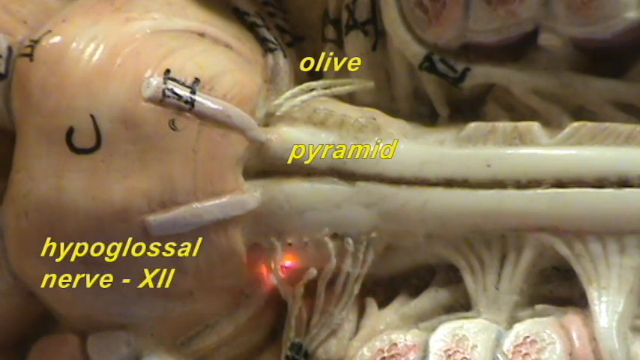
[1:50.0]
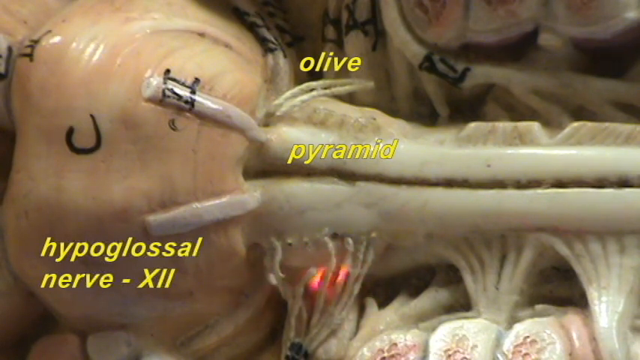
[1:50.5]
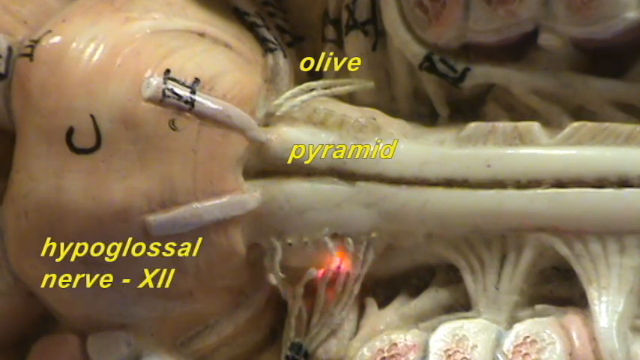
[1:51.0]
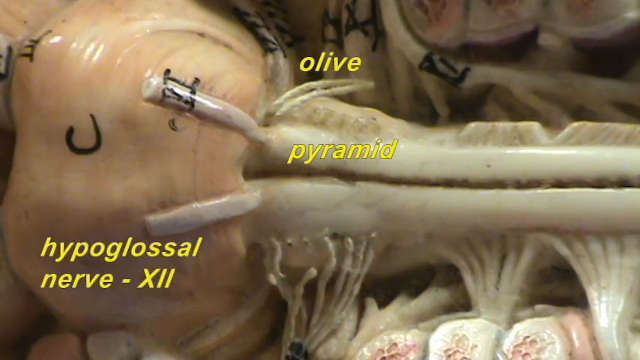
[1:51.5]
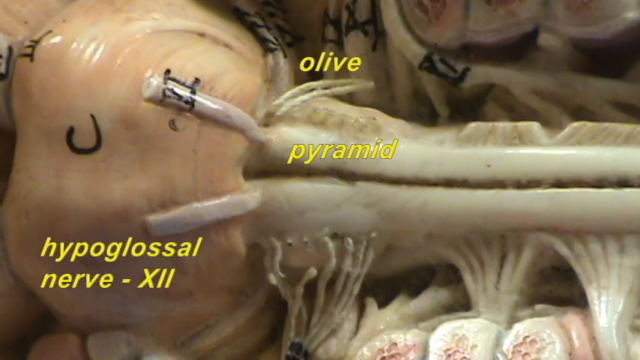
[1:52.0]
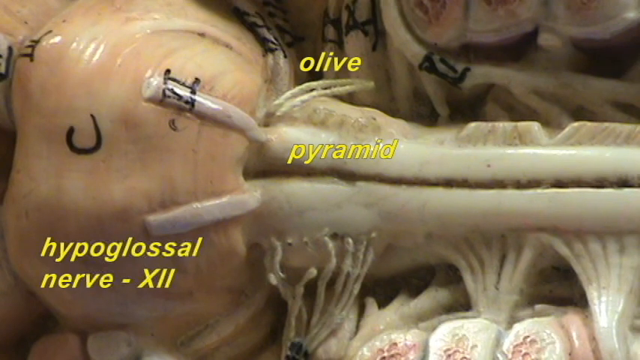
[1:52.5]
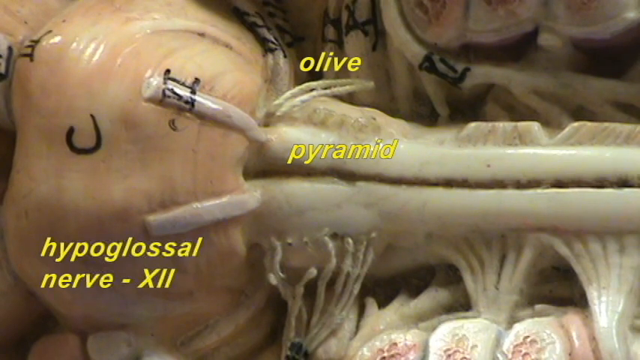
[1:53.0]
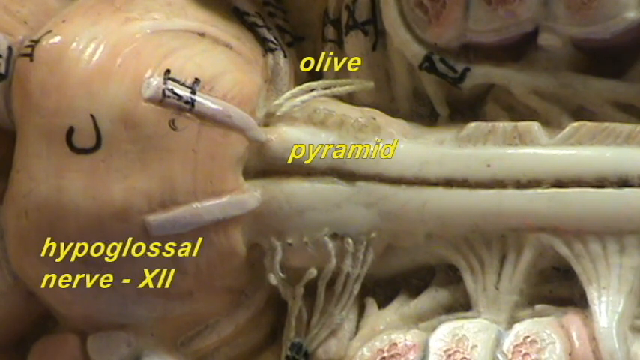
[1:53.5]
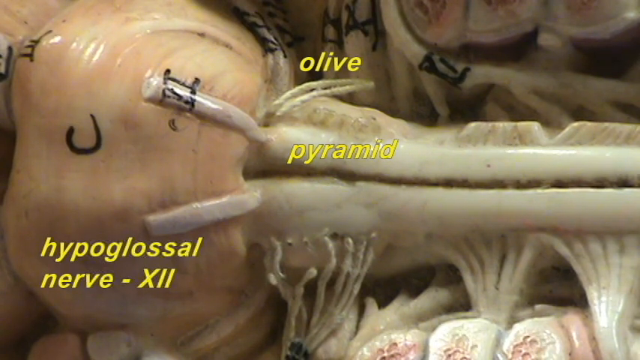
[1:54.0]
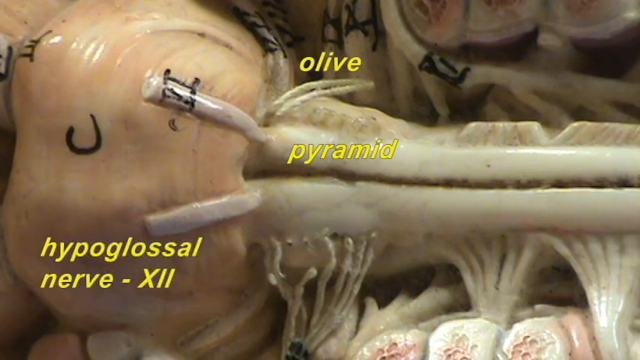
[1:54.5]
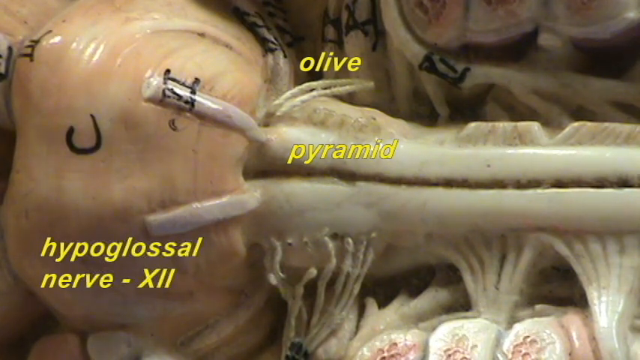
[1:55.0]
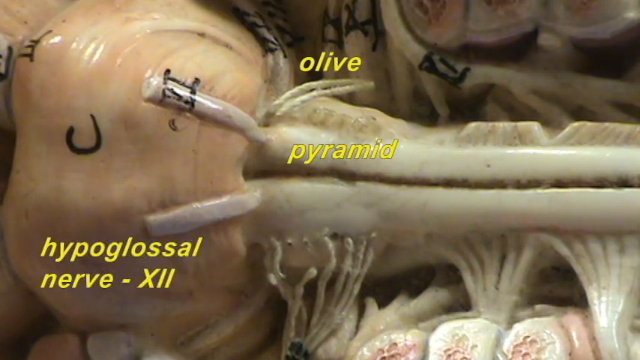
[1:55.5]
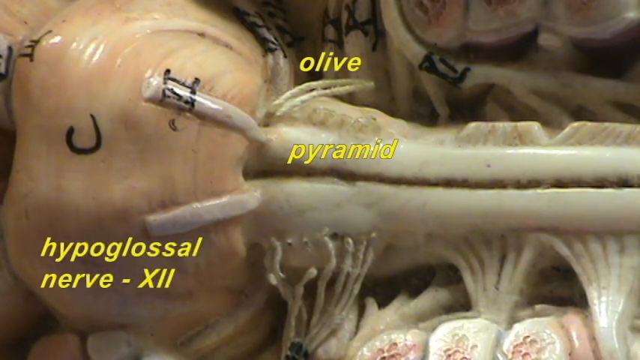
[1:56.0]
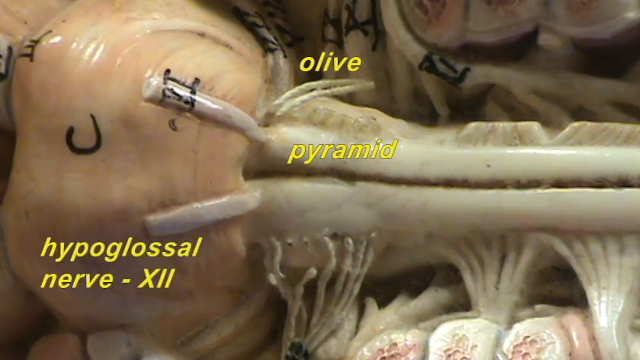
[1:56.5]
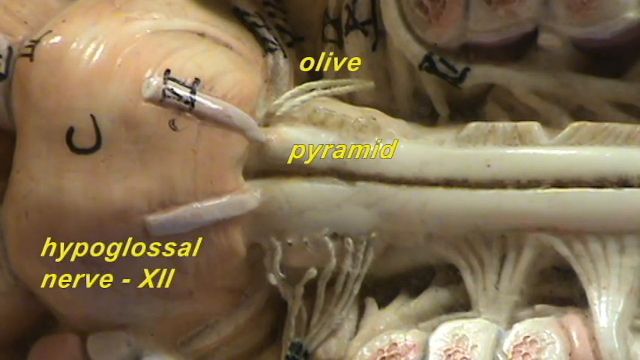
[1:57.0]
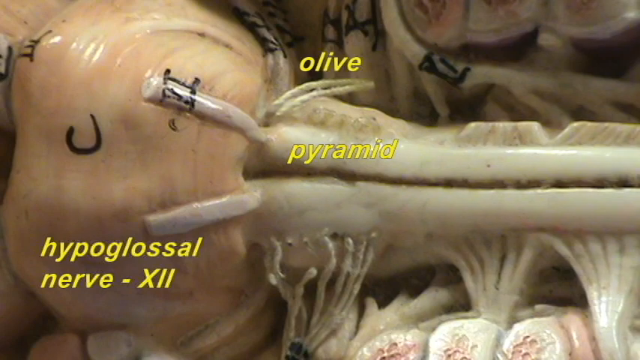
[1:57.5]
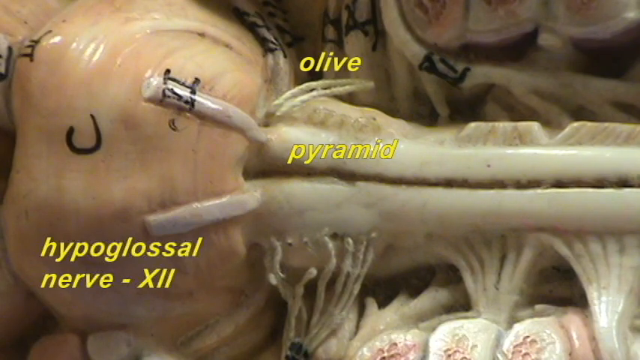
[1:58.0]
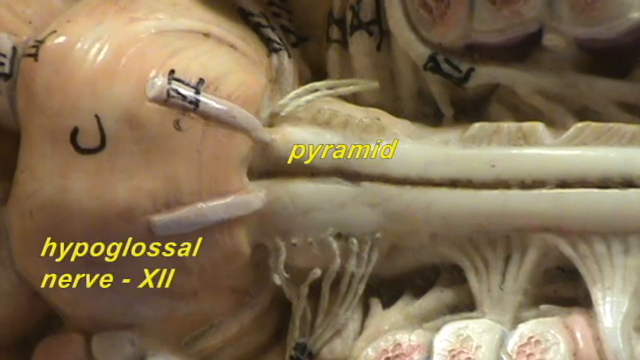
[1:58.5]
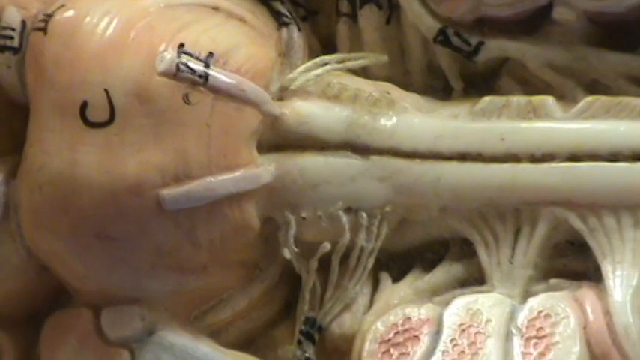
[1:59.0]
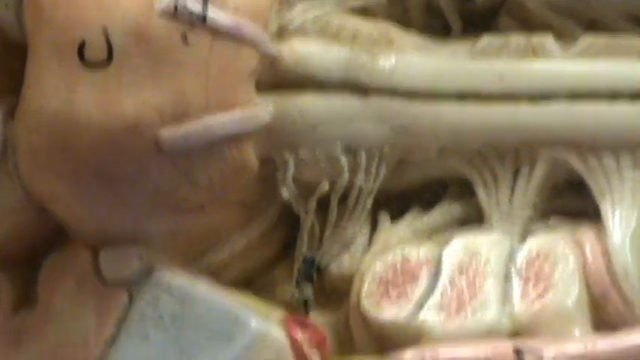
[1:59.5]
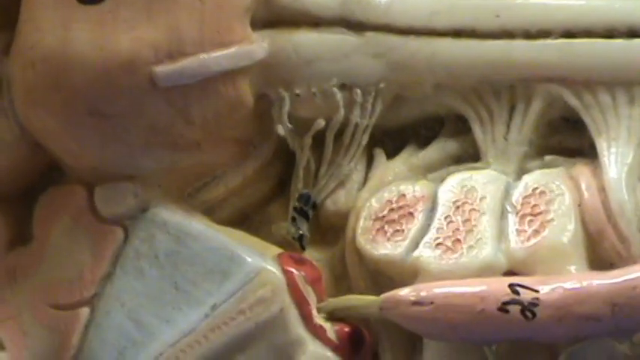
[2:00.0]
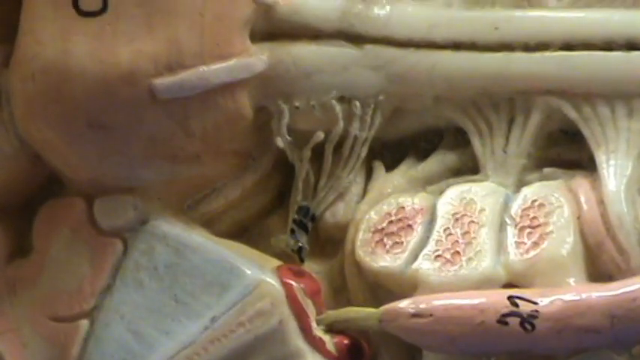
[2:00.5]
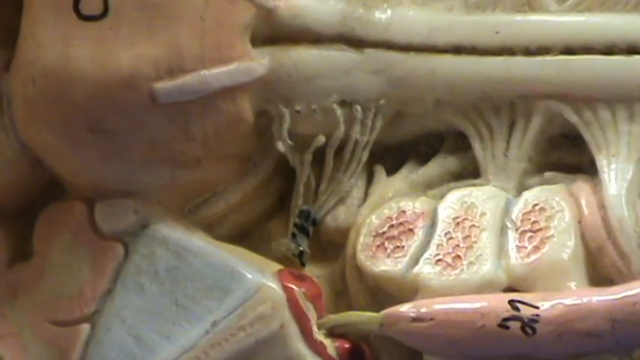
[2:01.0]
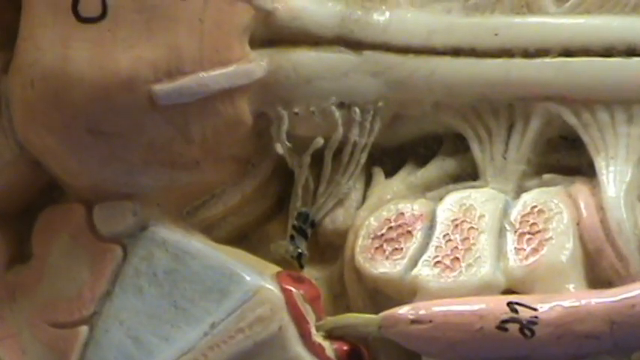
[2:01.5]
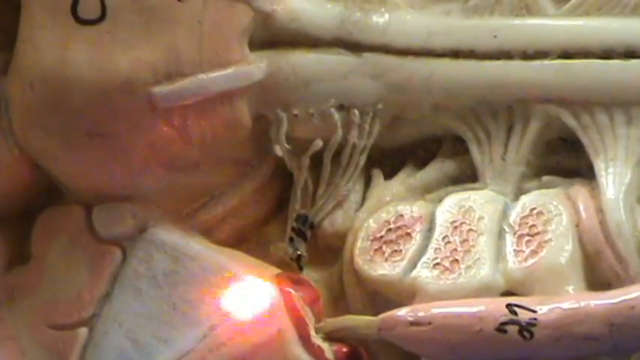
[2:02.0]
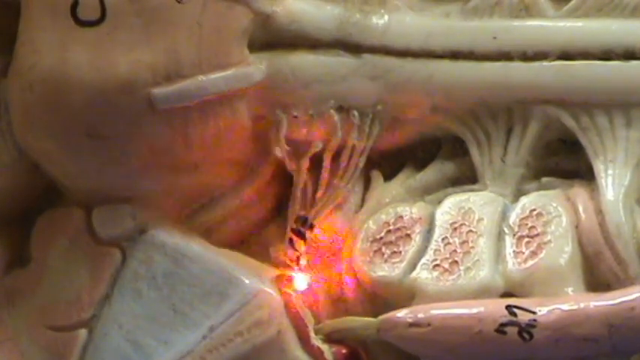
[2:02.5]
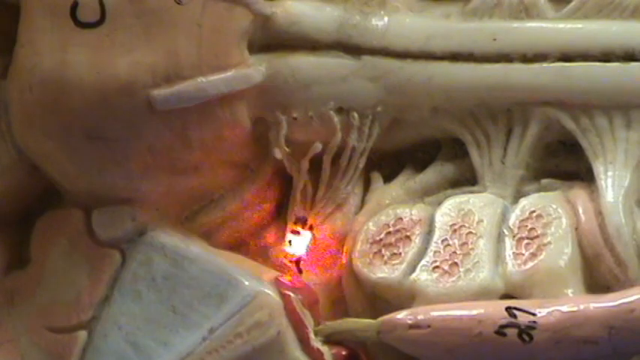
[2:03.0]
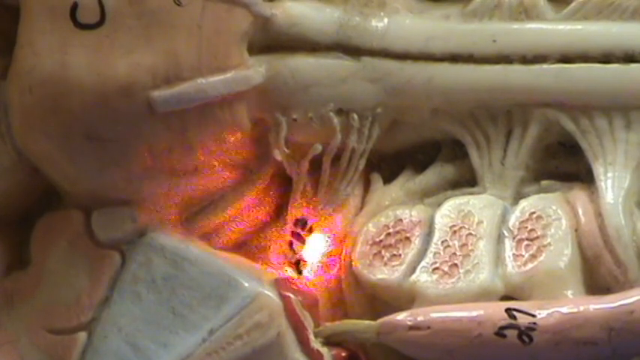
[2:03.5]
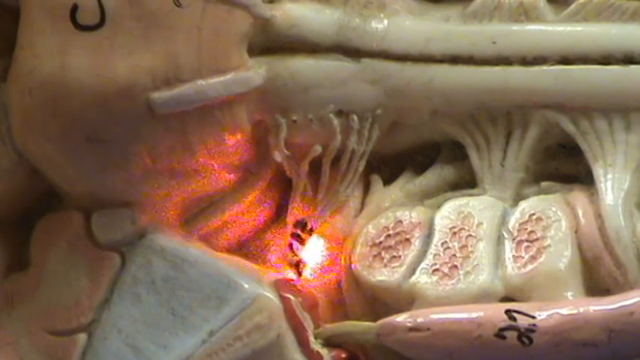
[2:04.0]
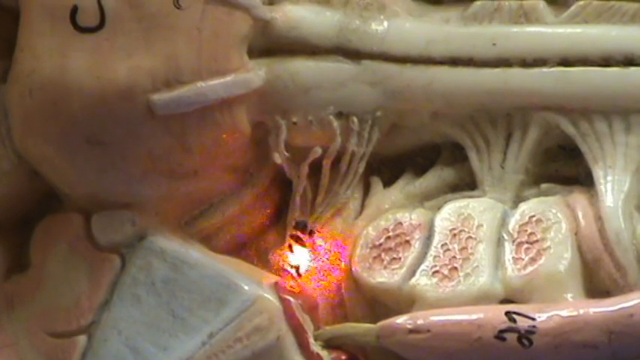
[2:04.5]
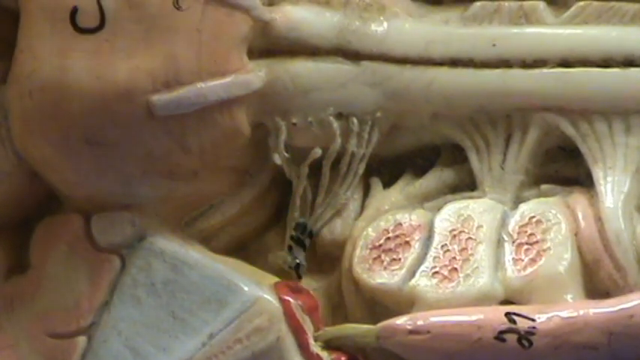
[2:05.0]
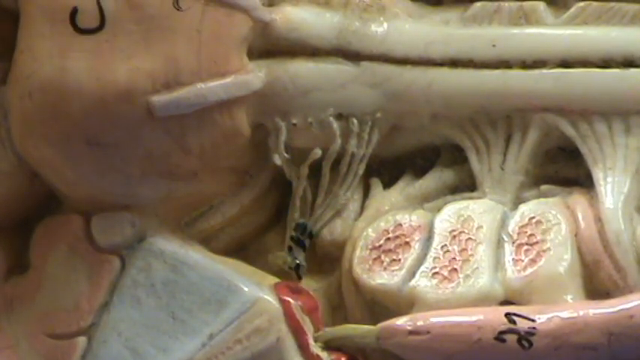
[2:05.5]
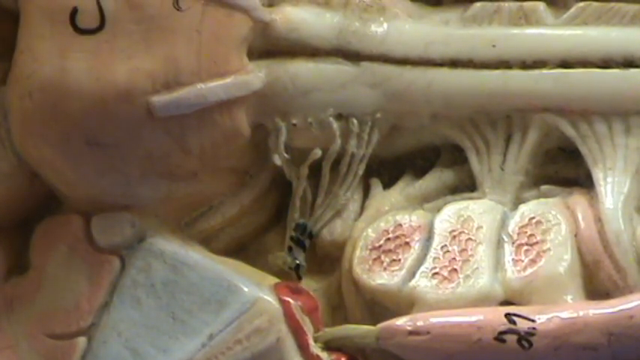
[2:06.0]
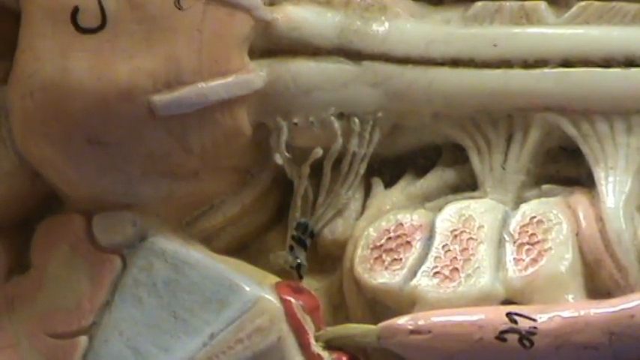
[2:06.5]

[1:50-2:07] The video appears to be instructional. In the center of the screen are the words "olive" and "pyramid," and in the lower left is "hypoglossal nerve, XII." The model of human anatomy, like a one-to-one representation, shows the spinal cord where it meets the base of the brain. A person uses a laser pointer to point to specific areas of the model, here the lower center of the frame, the lower side of the spinal cord where some nerves come off it. The pointer moves slightly and rapidly, not held completely still, as it points to very specific areas.